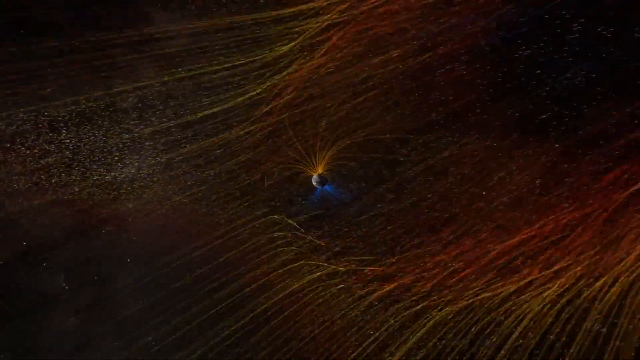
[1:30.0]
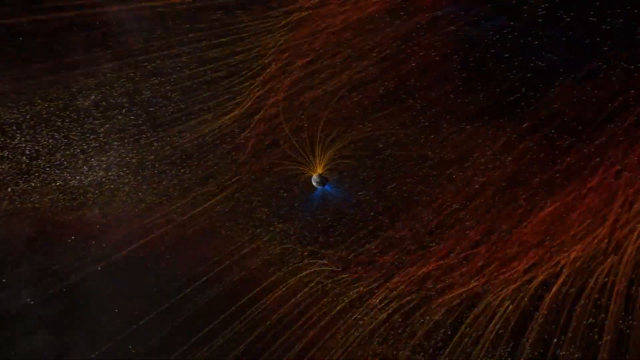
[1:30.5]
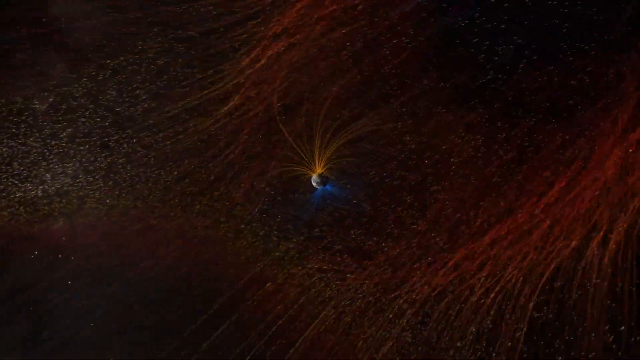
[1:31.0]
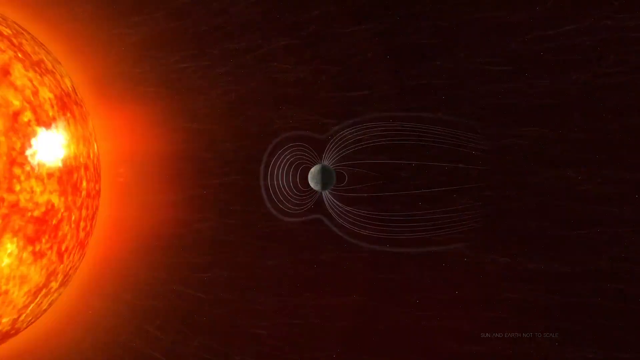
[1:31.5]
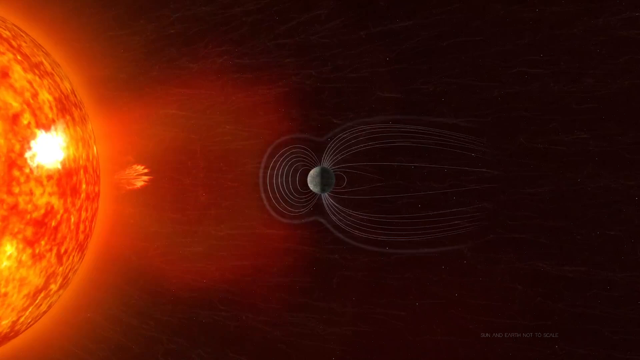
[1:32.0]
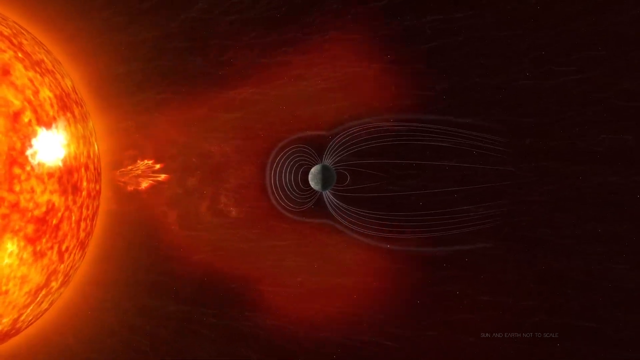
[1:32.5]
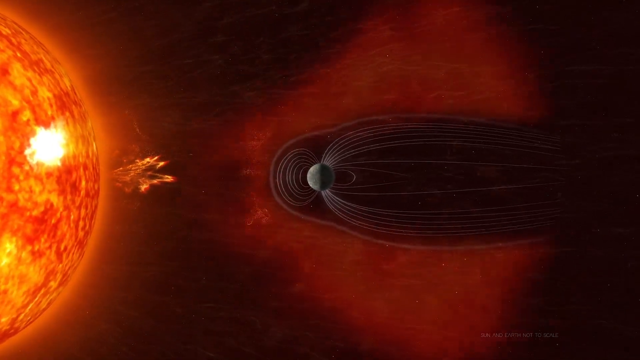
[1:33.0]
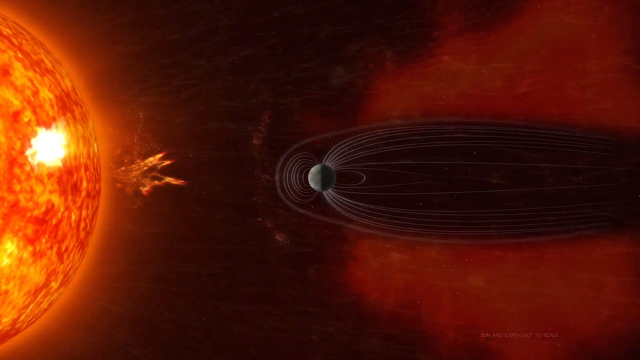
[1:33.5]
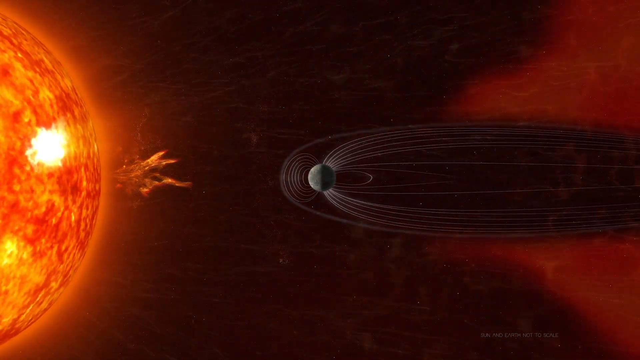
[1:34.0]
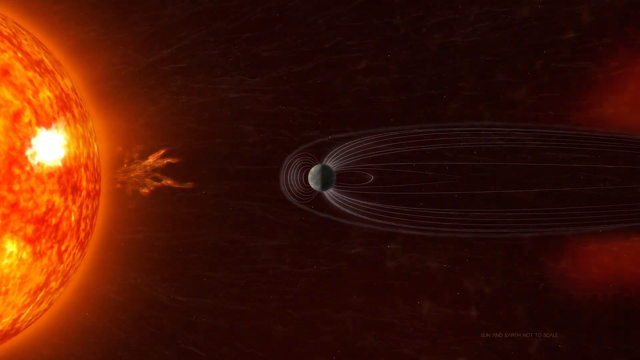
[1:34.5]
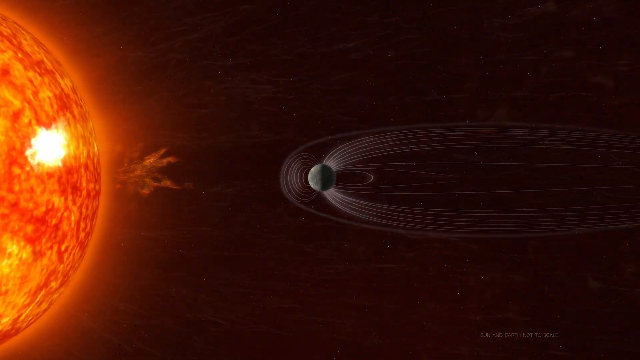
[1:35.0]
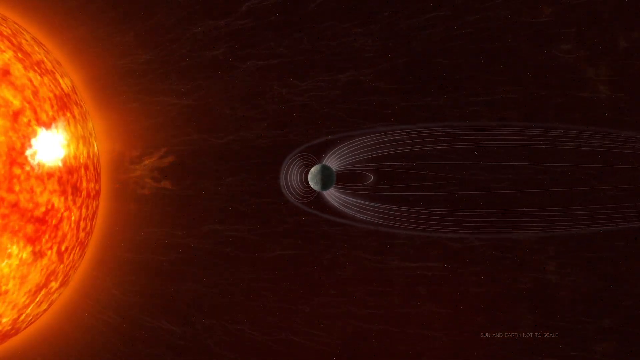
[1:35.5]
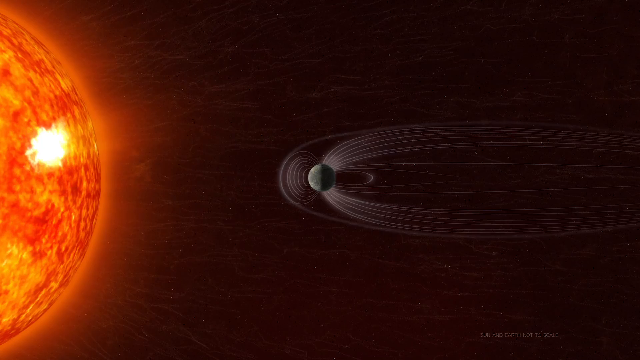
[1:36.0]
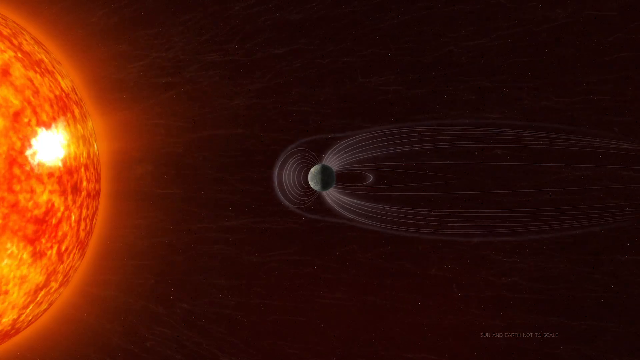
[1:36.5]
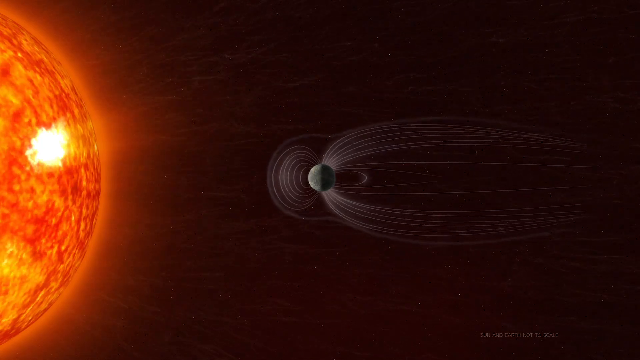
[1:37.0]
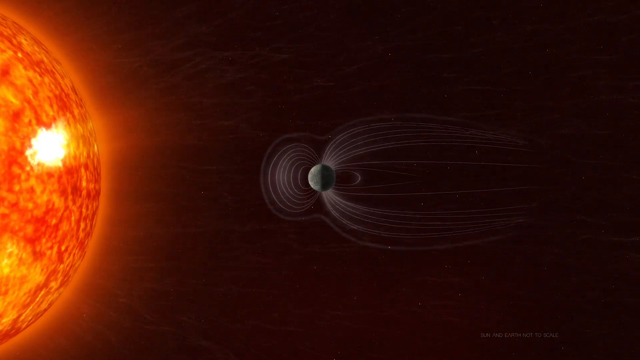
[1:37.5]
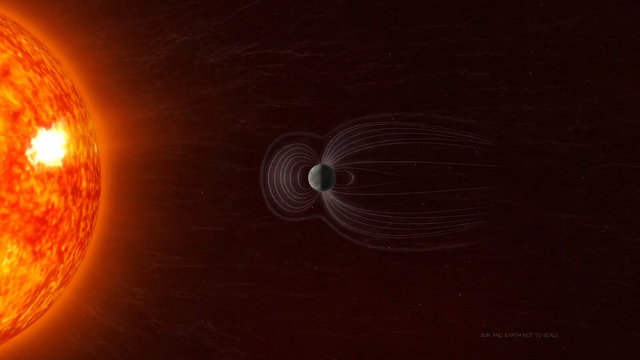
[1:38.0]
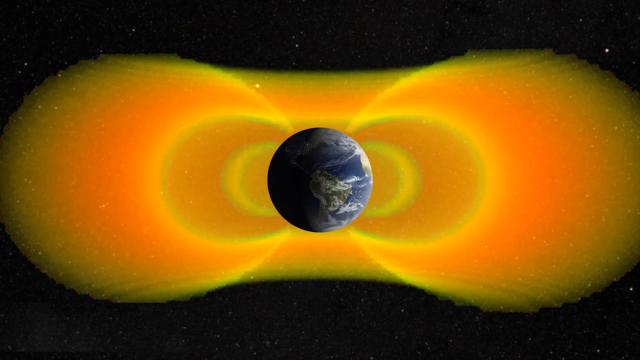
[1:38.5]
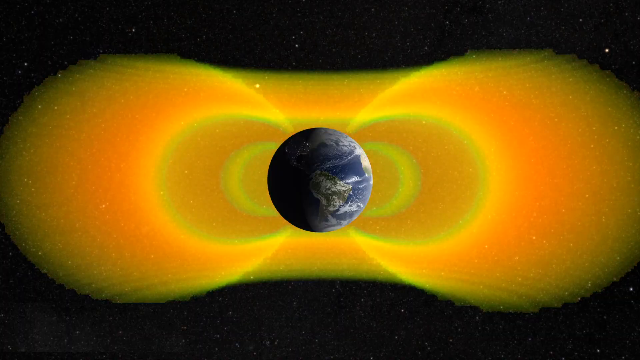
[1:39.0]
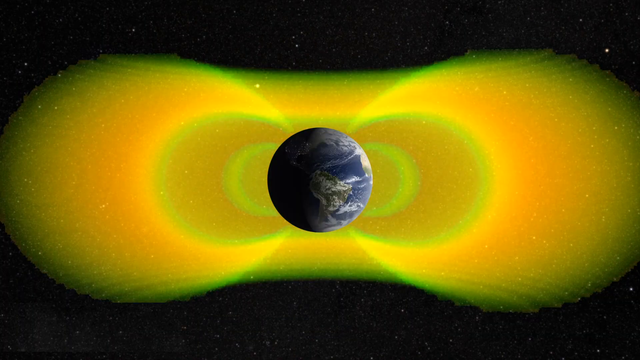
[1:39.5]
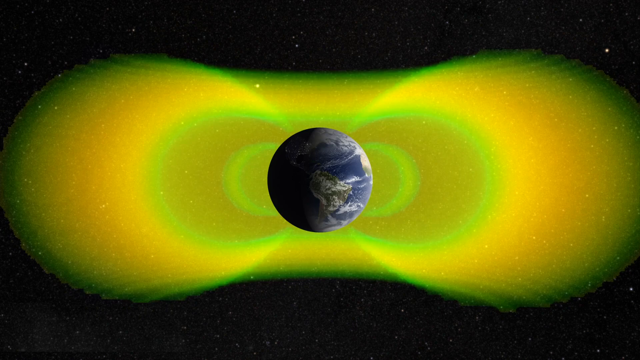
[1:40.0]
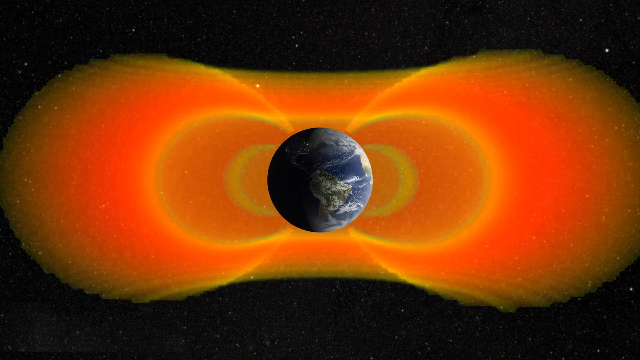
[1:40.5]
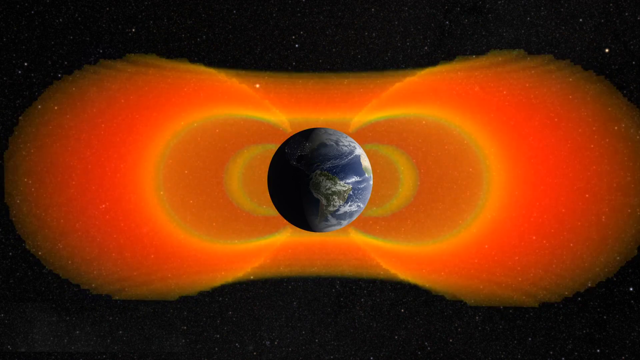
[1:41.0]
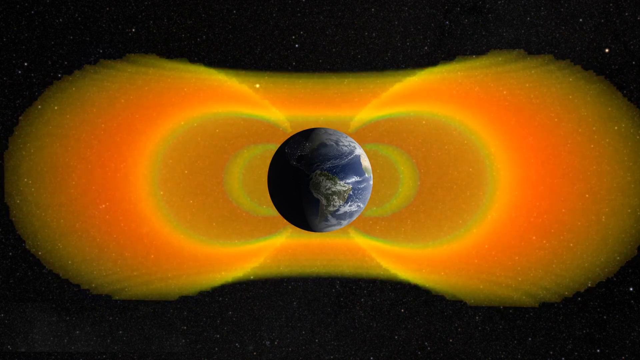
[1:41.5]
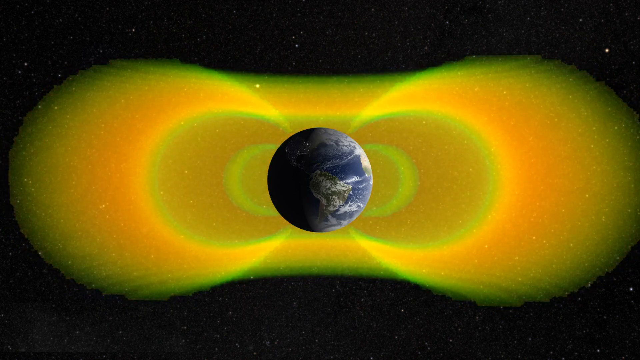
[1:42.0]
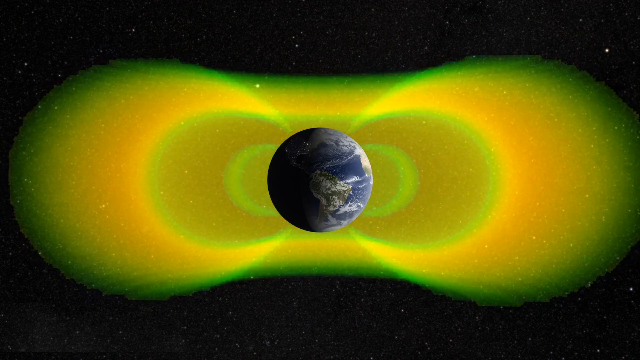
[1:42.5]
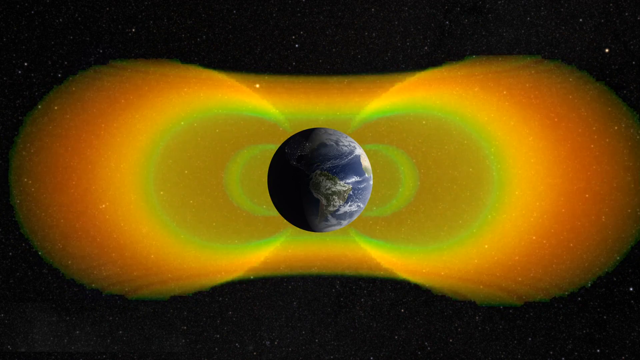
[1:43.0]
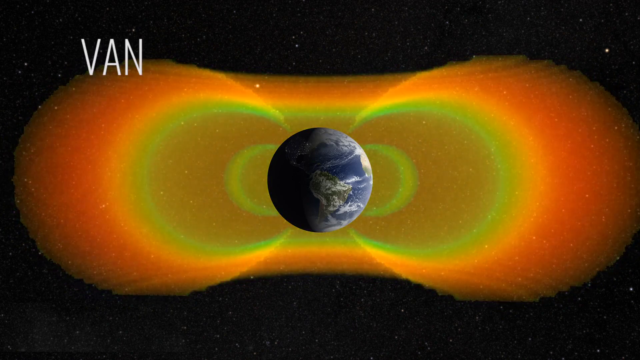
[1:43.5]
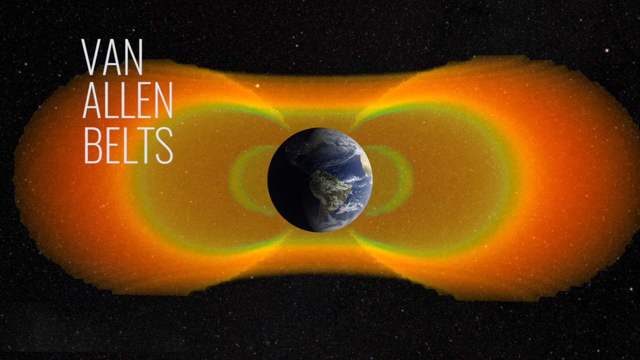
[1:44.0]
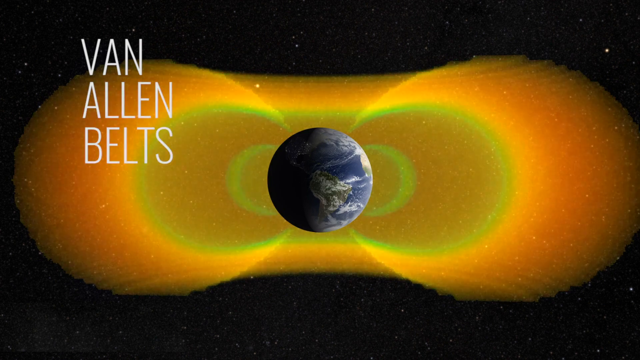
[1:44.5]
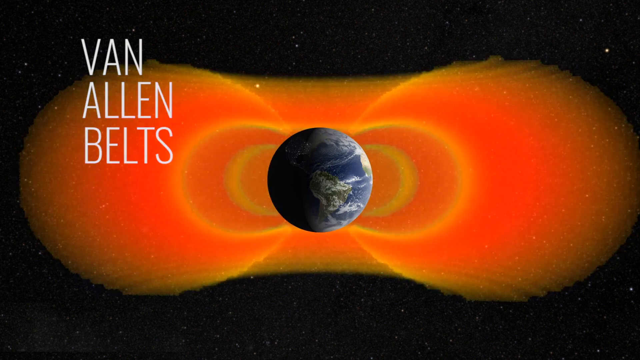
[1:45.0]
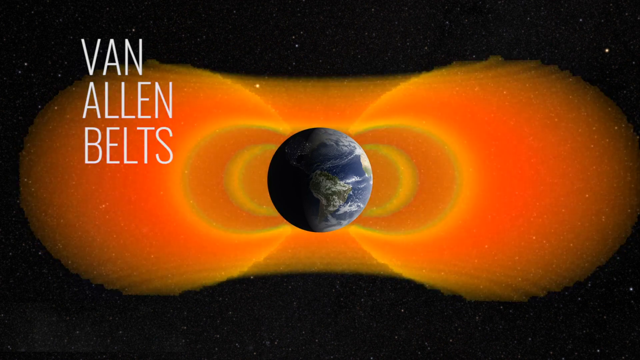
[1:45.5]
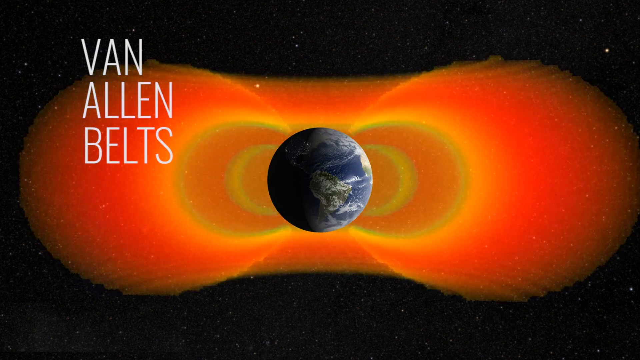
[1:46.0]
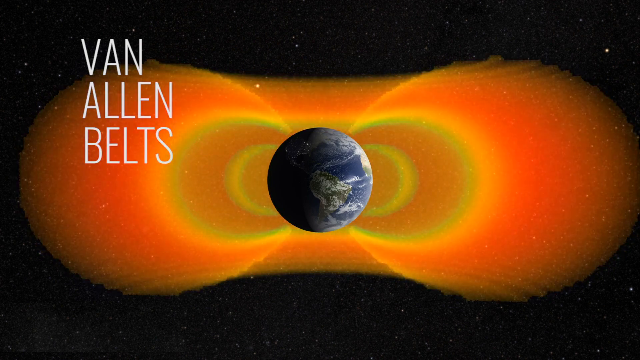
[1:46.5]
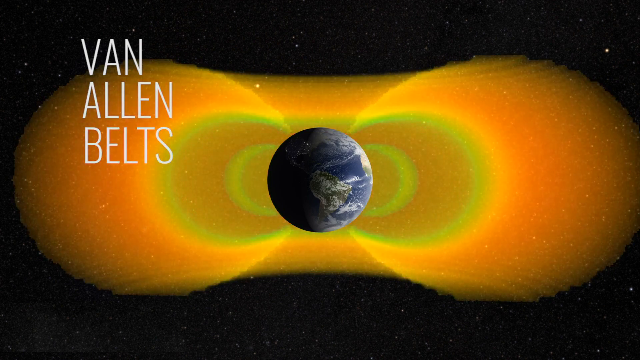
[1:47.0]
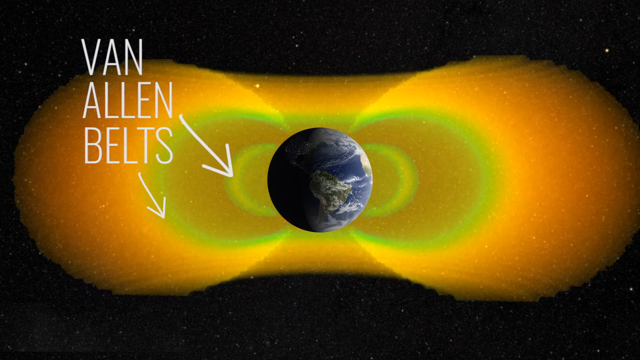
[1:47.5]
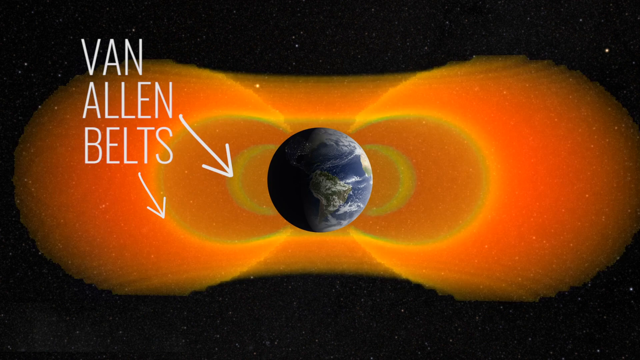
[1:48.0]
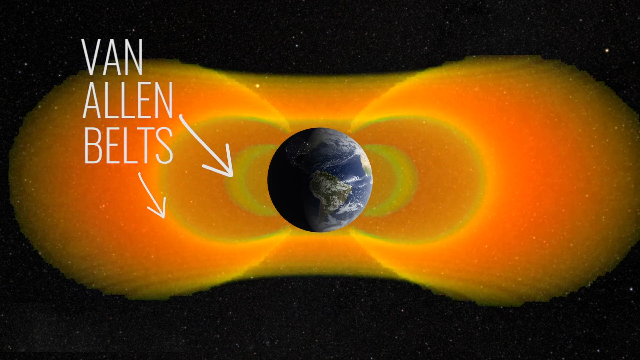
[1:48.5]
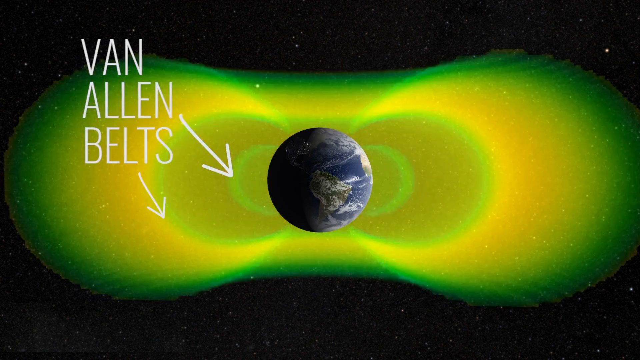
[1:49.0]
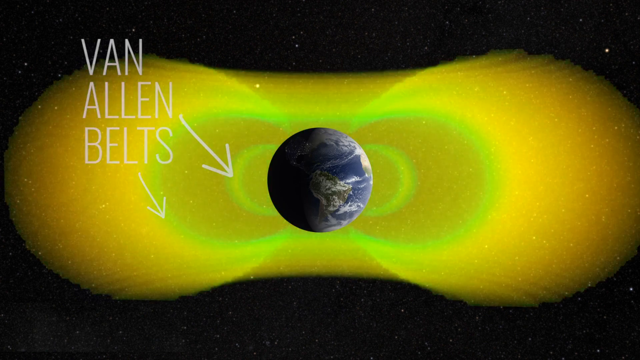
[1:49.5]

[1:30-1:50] Earth is surrounded by a number of lines forming a kind of protective force field. Over on the left-hand side, a red glowing planet takes up the screen from top to bottom and exhales a cloud of red particles that passes toward Earth, but the lines surrounding Earth act as a protective force field, and the red cloud continues onward without touching Earth until it disappears. Next, planet Earth rotates toward the right on its axis, showing blue water, greenish land and white swirls of cloud. Surrounding Earth is a pattern of a yellow semicircle, a green outline, a yellow semicircle, a green outline, a yellow semicircle and a final green outline, forming kind of a donut shape around the planet. The colors pulsate, the yellow turning bright red and then back to yellow. White letters reading "Van Allen belts" appear on the screen, with arrows pointing to the green outlines surrounding each semicircle.